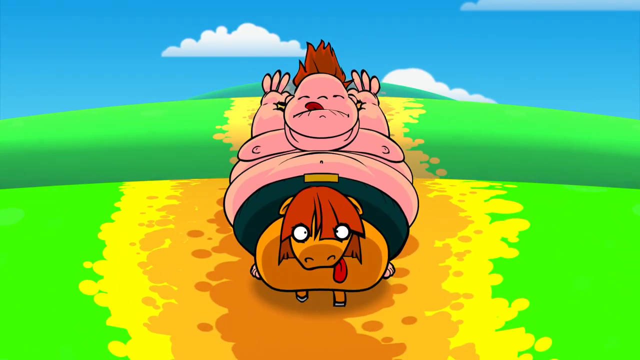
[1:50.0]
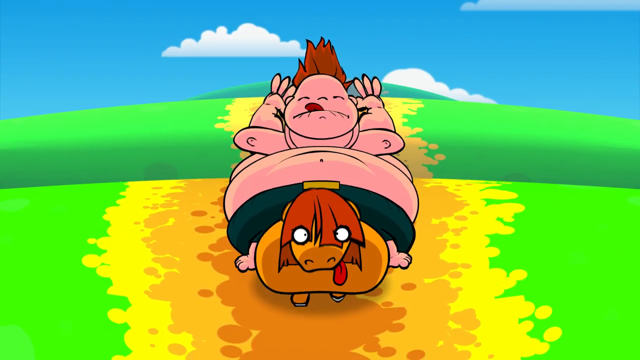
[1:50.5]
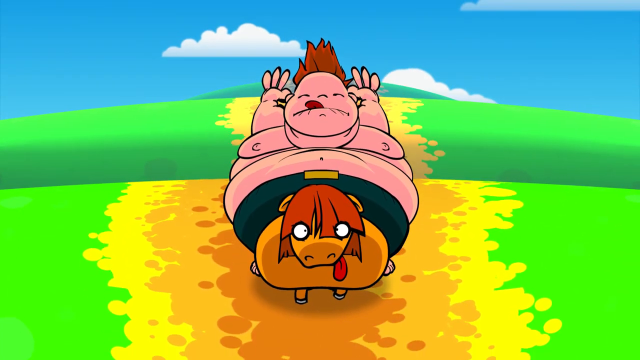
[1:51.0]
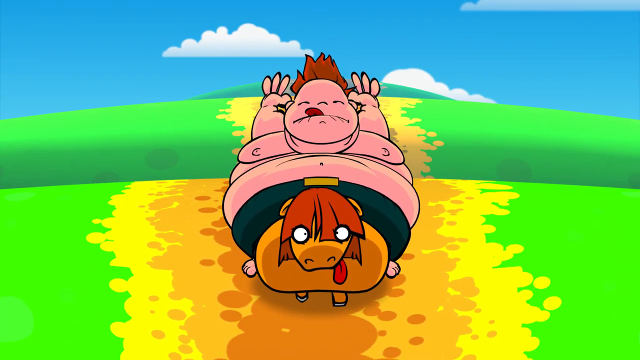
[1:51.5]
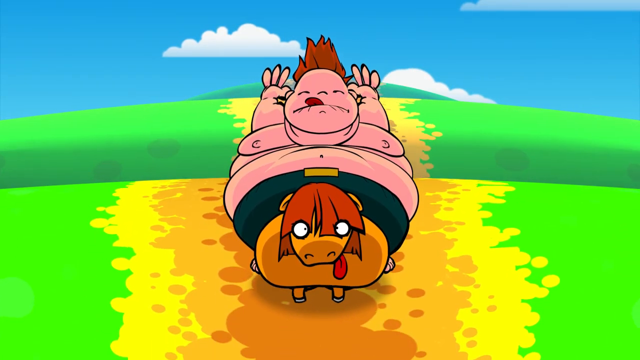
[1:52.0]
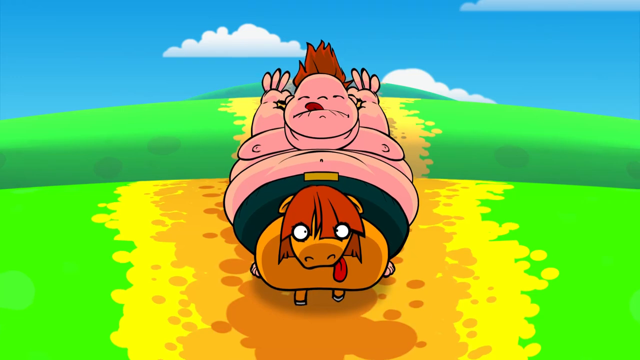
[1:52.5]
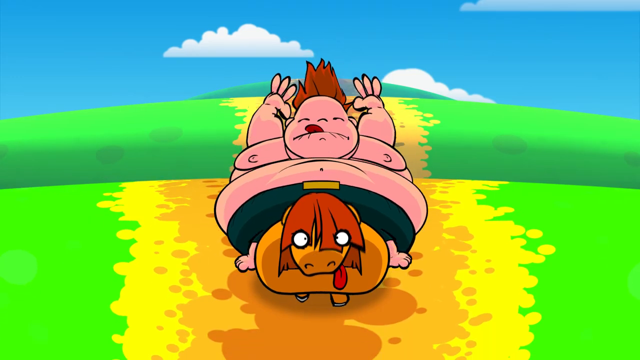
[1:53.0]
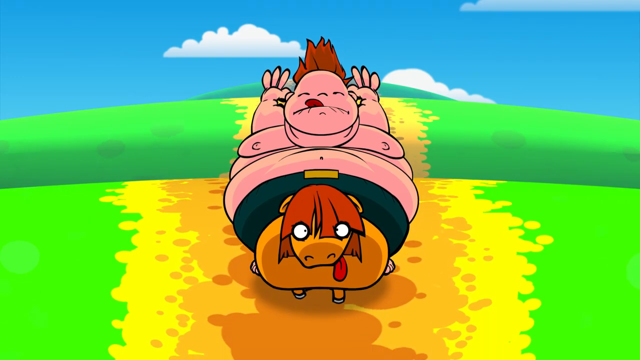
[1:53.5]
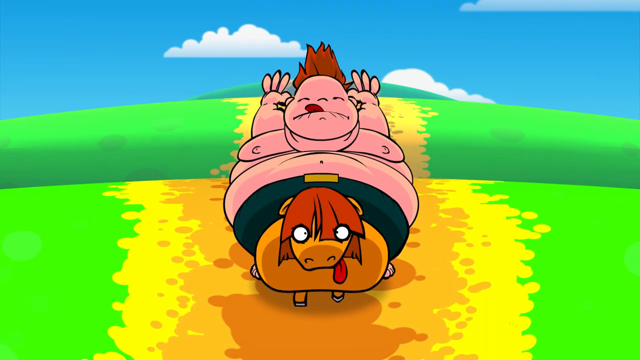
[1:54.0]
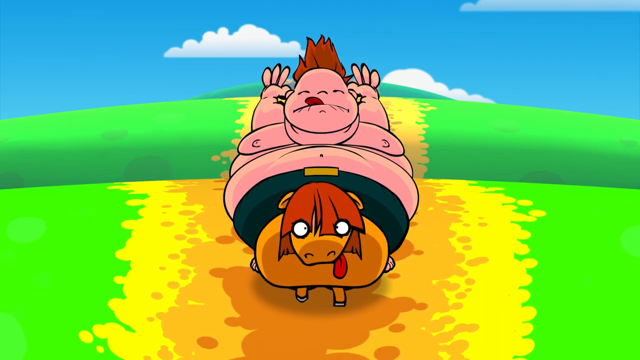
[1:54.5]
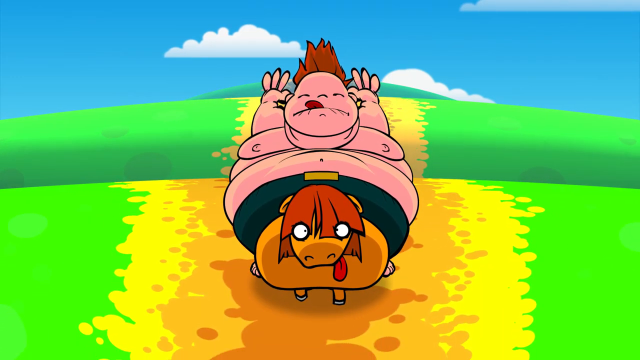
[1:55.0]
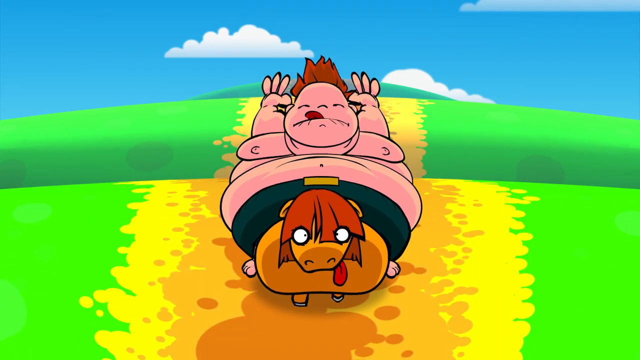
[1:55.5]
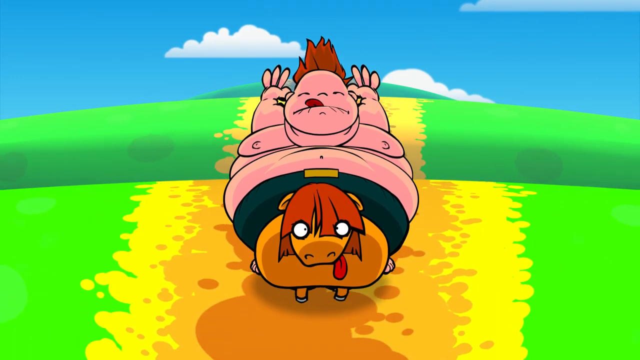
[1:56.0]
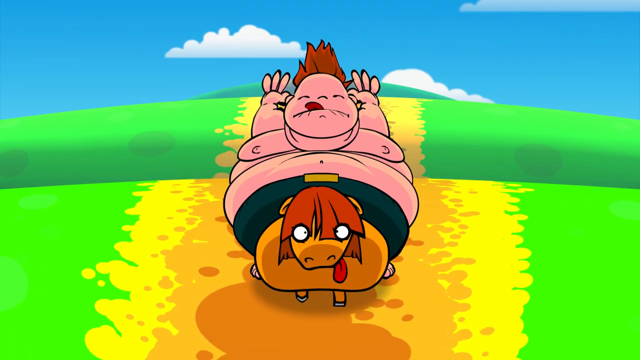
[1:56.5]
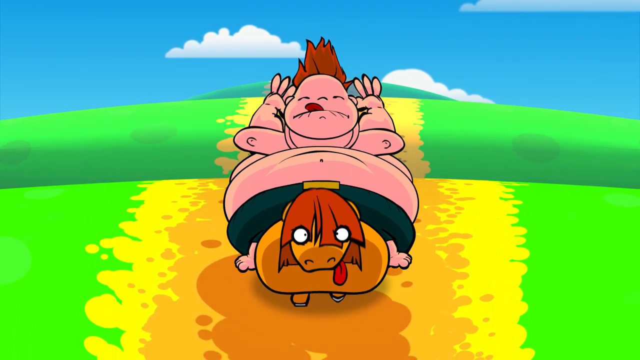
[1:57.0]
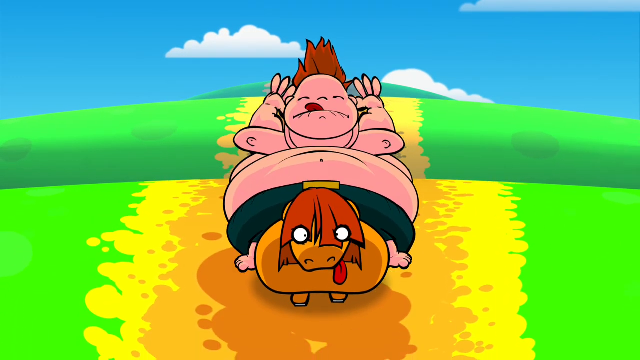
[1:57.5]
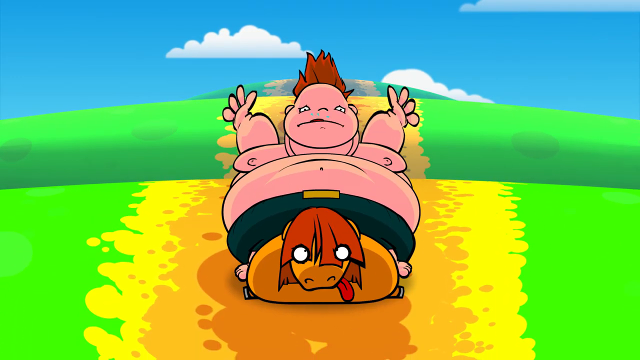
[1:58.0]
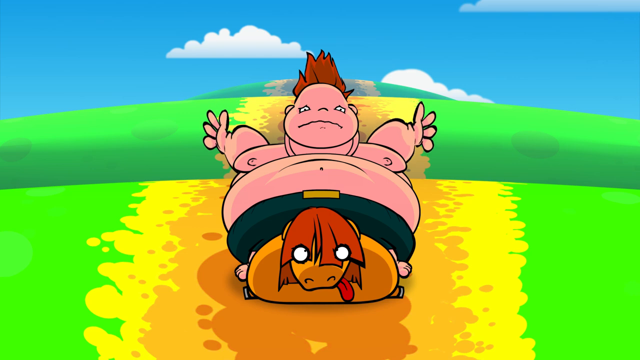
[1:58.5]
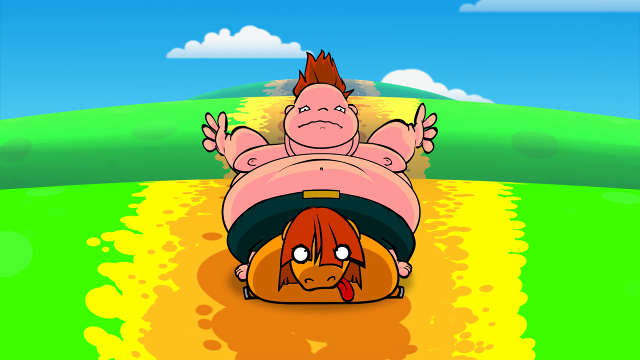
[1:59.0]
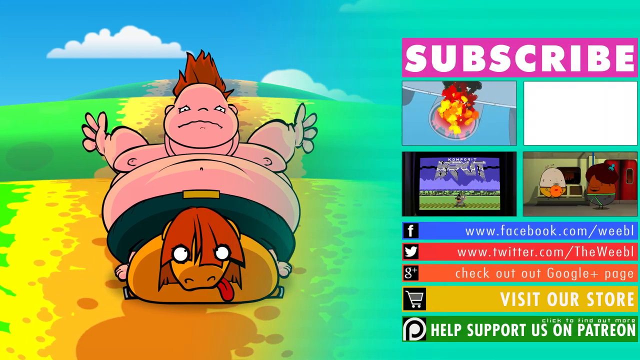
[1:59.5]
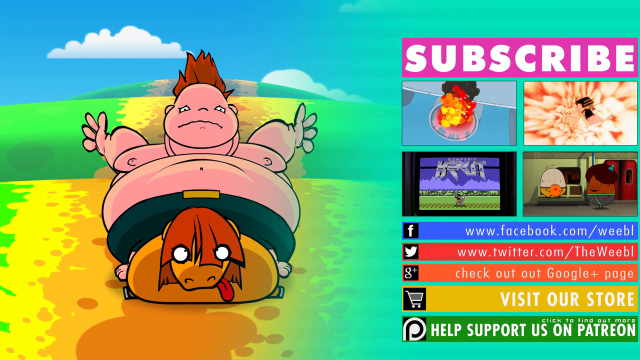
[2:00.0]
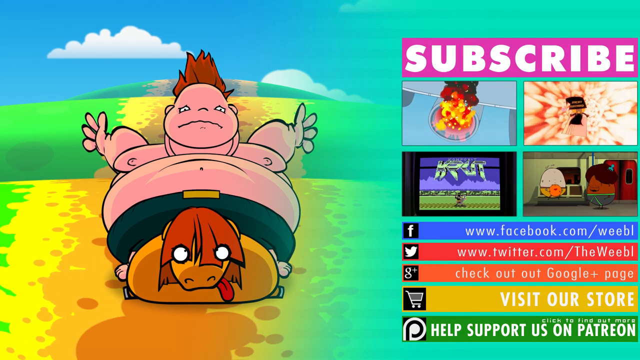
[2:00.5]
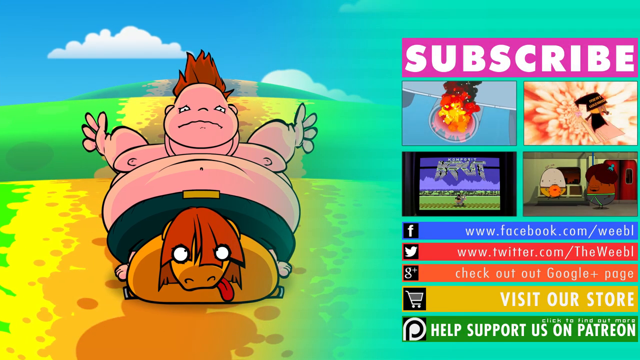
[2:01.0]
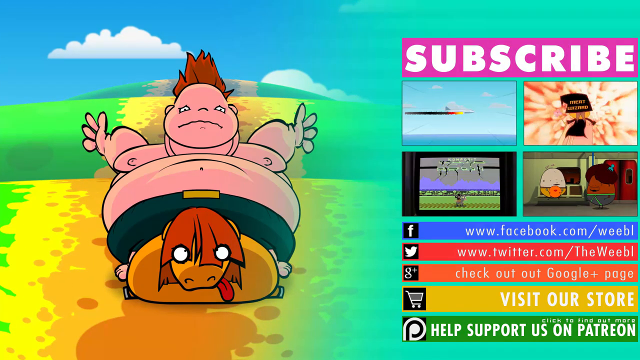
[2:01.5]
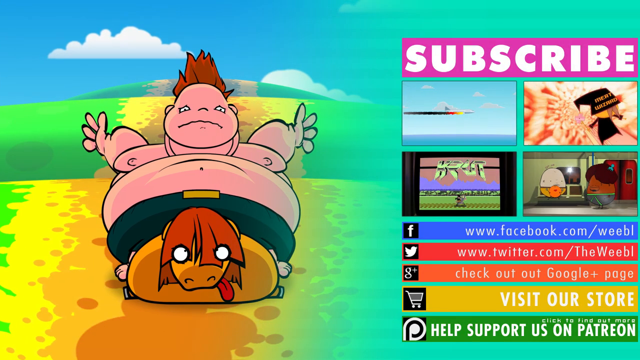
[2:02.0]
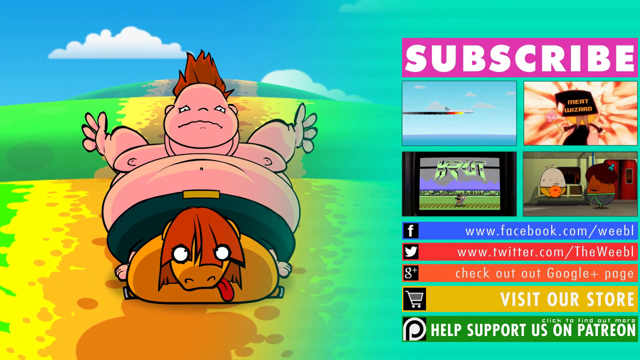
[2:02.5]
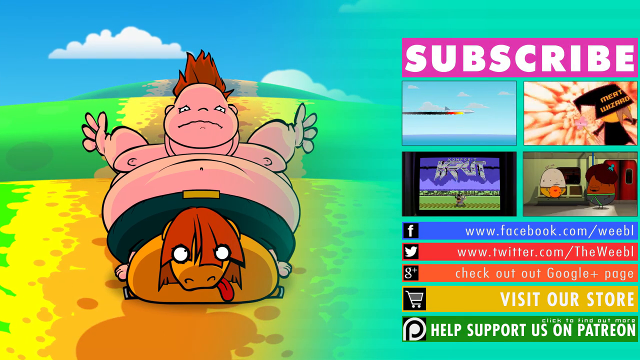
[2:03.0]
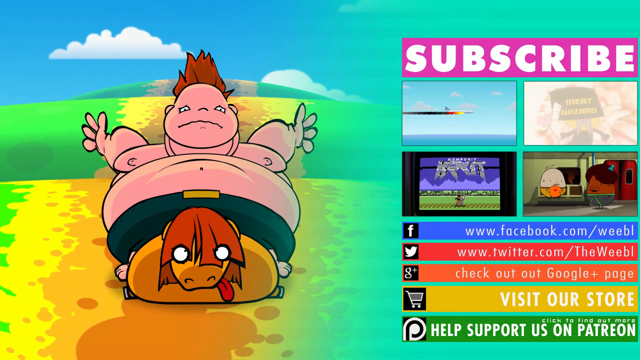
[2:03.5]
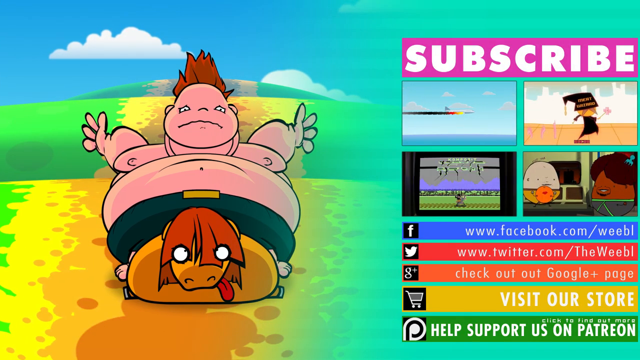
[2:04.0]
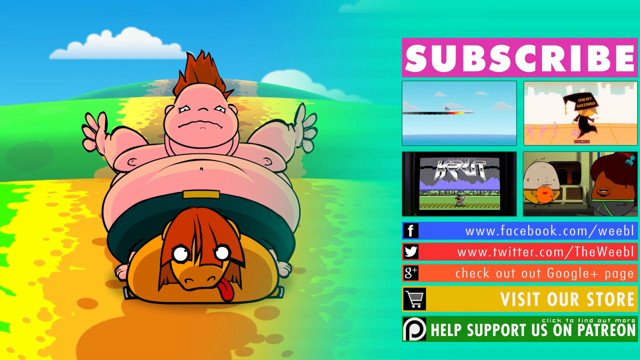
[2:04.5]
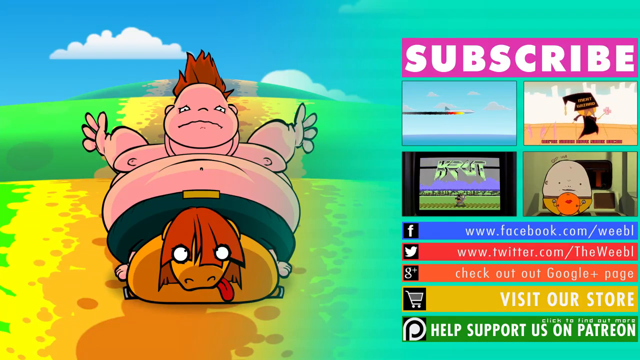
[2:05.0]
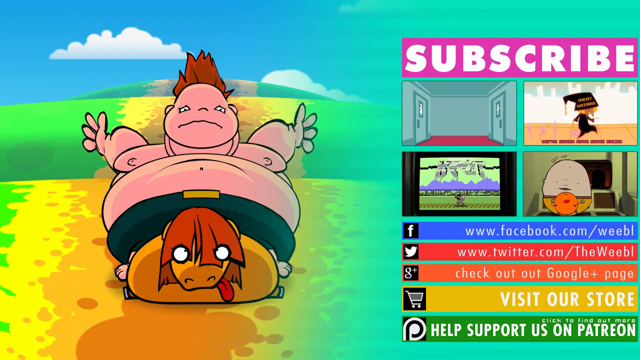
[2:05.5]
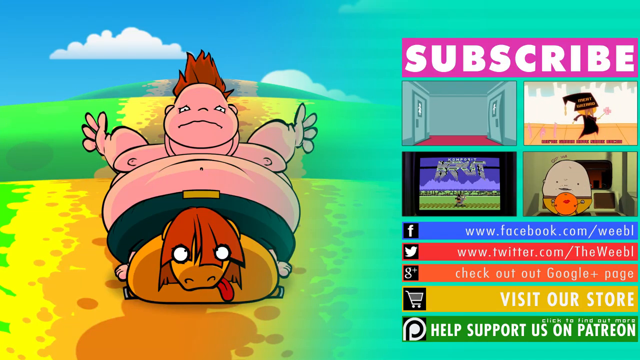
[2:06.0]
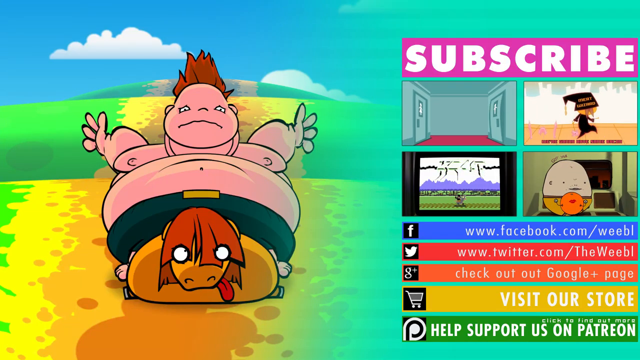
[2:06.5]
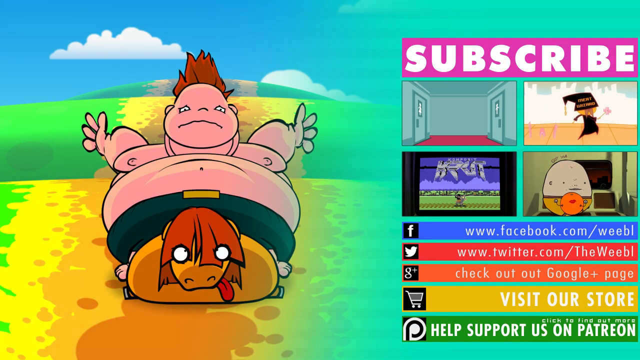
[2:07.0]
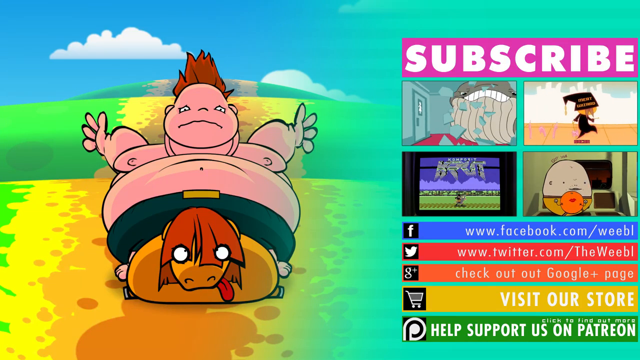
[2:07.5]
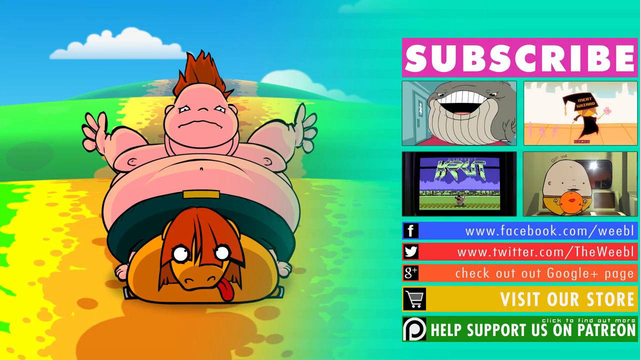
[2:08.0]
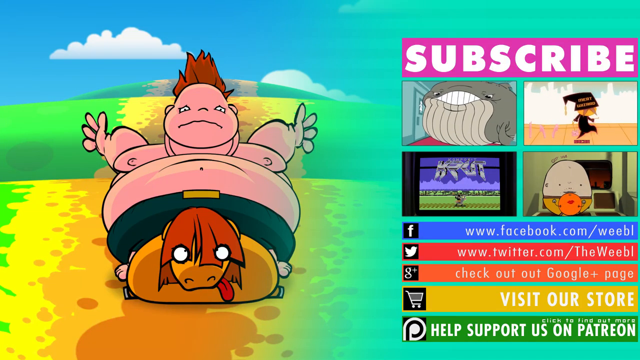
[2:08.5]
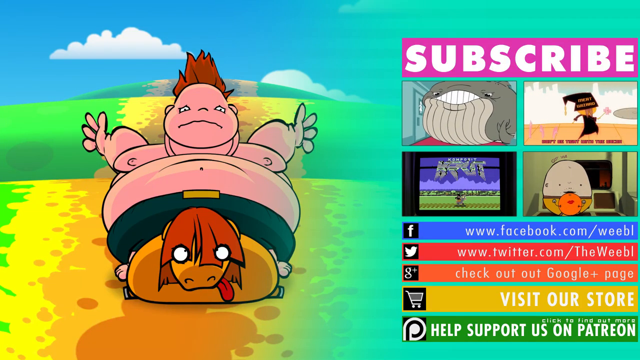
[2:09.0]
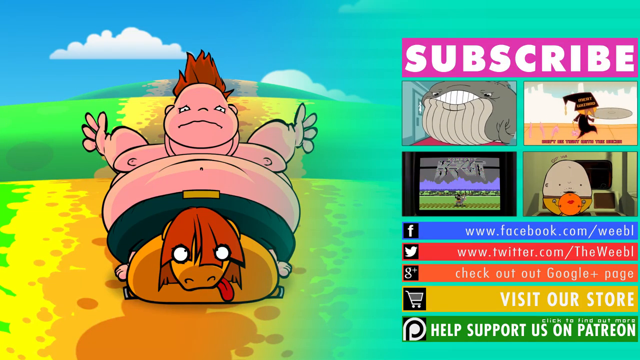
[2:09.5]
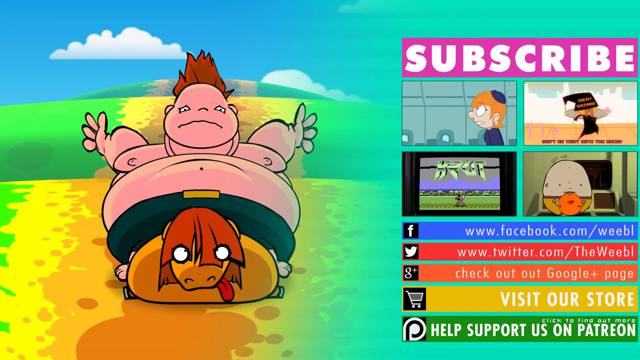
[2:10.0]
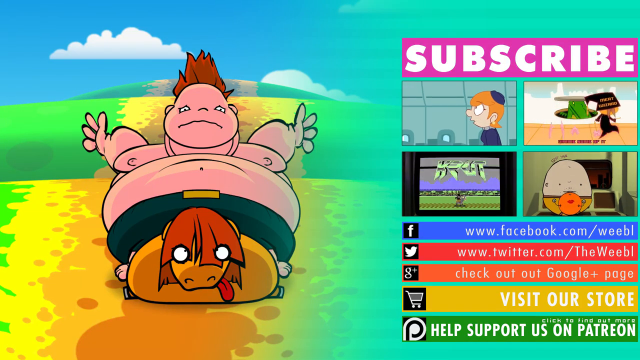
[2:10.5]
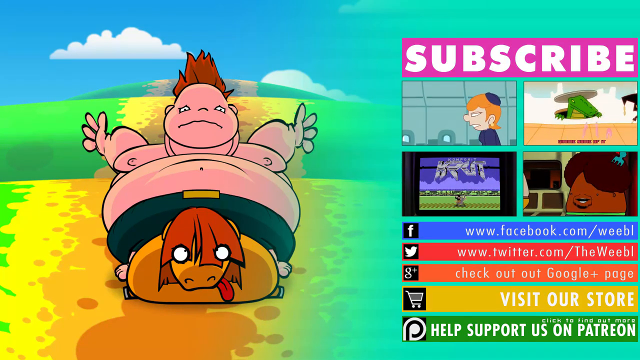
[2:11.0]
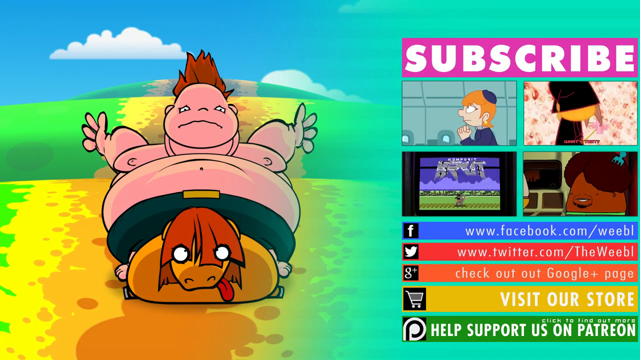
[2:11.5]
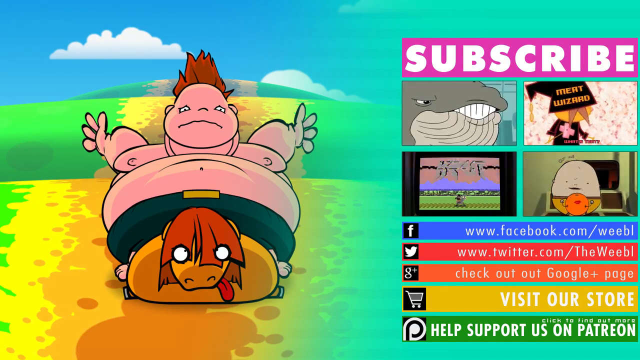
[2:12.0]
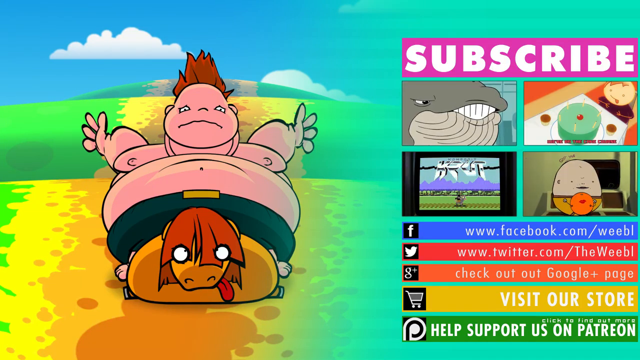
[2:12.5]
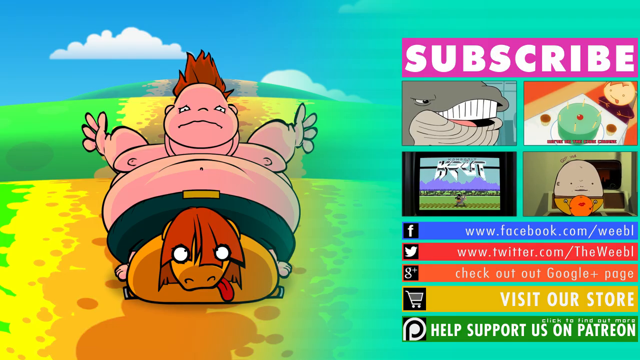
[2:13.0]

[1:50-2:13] The cow travels slowly, one step at a time, apparently tired, its eyes wide open as it approaches the end. It stops and sits down with its legs spread wide, the left legs to the left and the right legs to the right, then lies down on its stomach, exhausted. The boy riding it now has a sad face, since the ride has stopped completely. Then short scenes appear on the right side with "subscribe" text, a Facebook page, Twitter, G+, store, and a "help support us on Patreon" button, for supporting or subscribing to the channel, named TheWeebl.